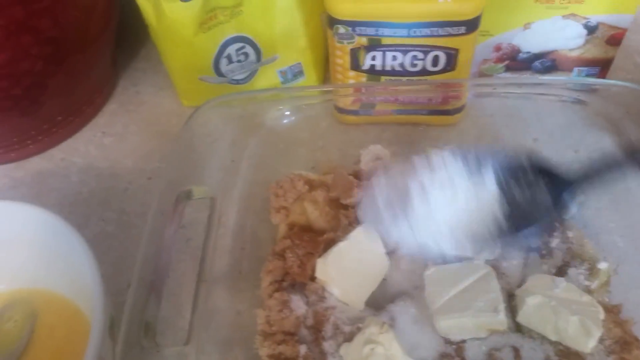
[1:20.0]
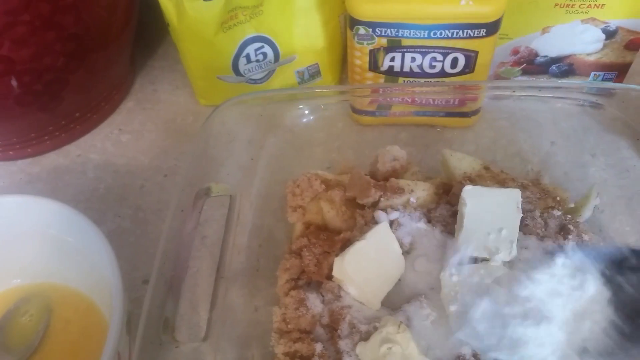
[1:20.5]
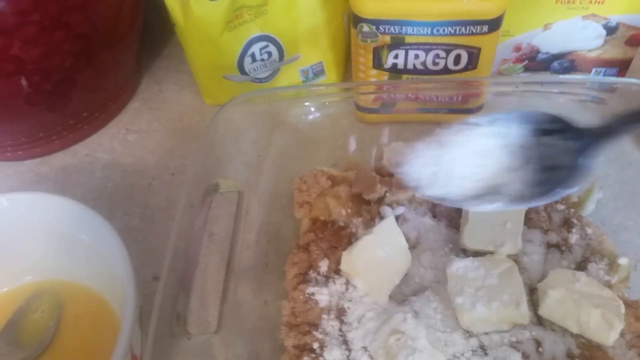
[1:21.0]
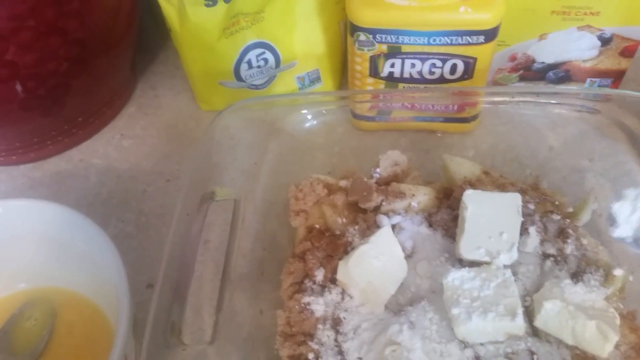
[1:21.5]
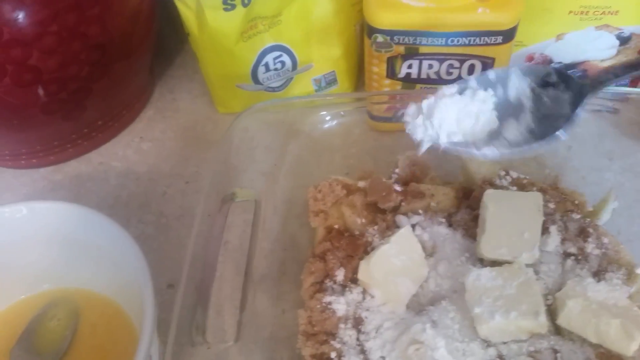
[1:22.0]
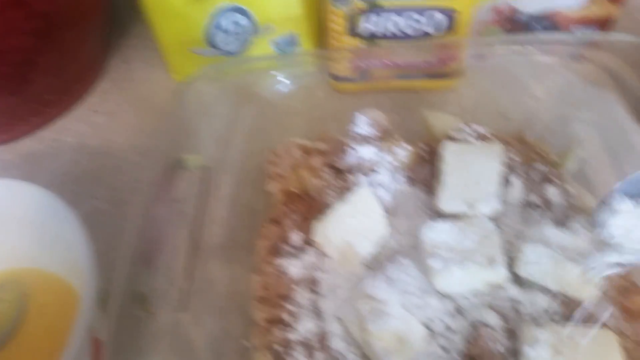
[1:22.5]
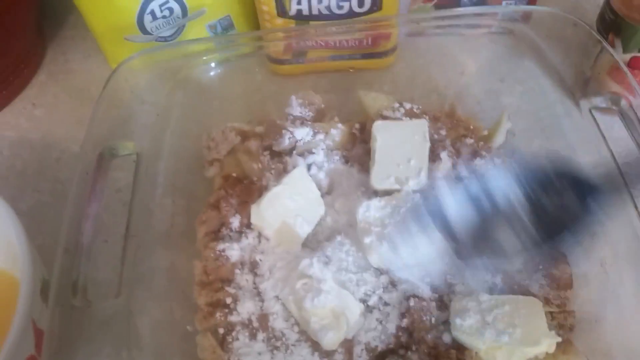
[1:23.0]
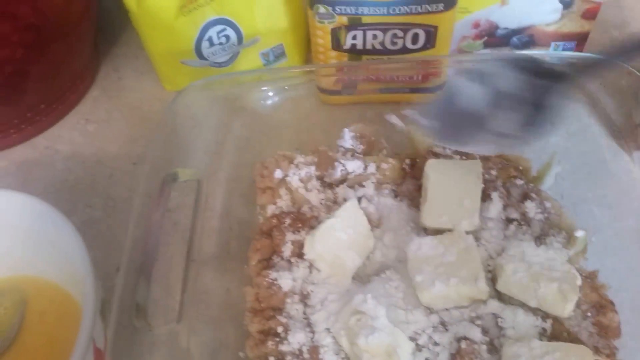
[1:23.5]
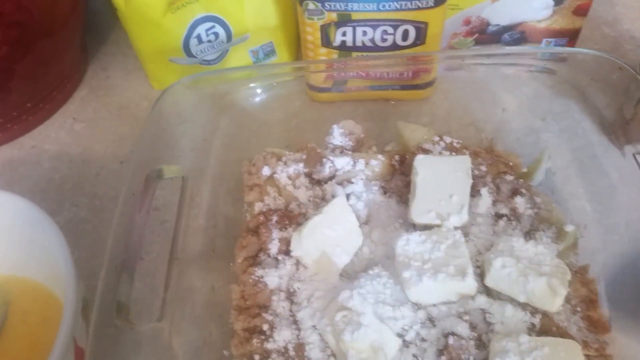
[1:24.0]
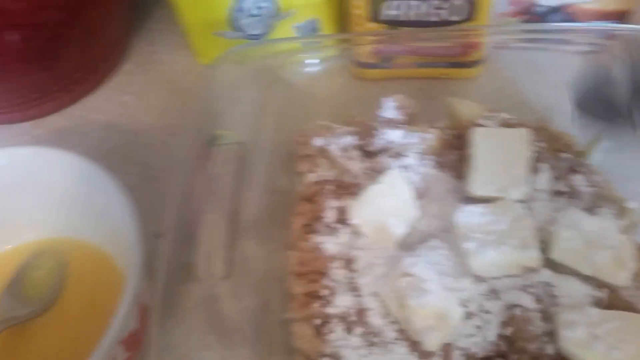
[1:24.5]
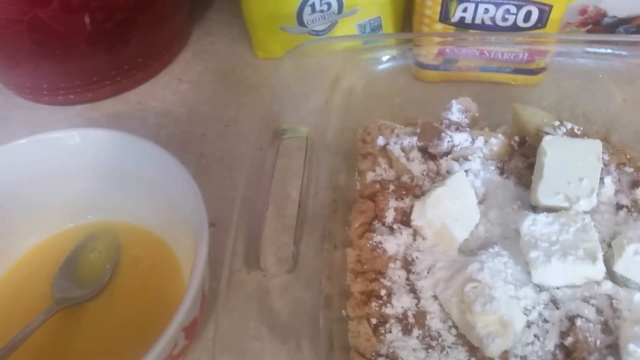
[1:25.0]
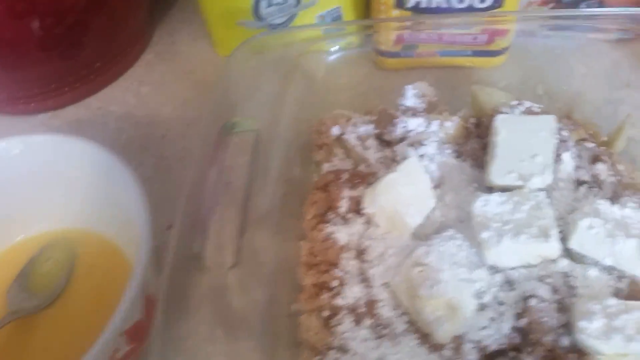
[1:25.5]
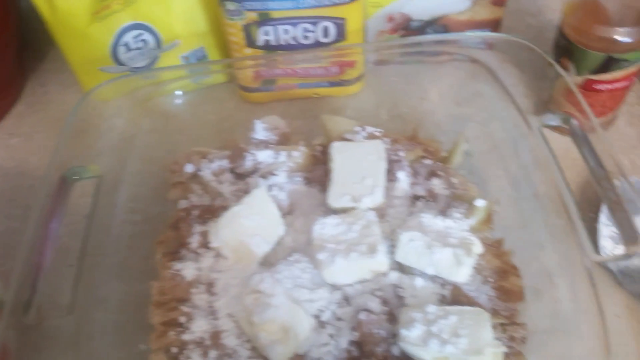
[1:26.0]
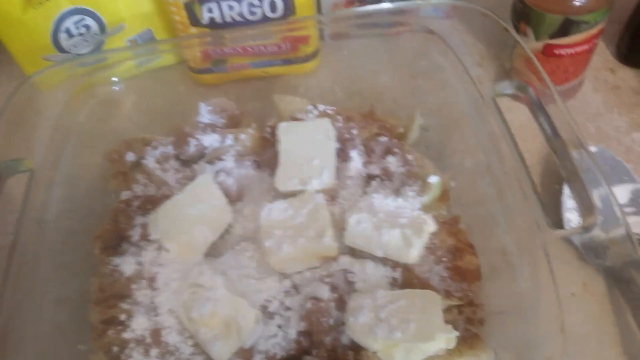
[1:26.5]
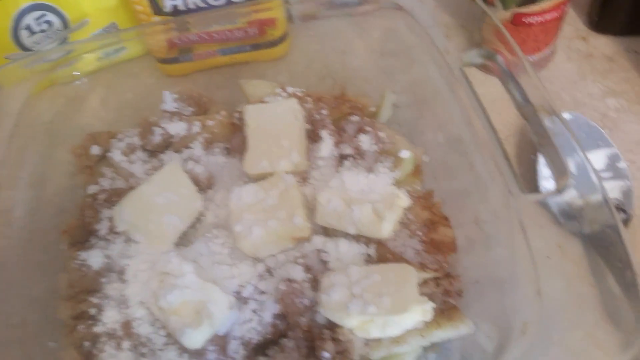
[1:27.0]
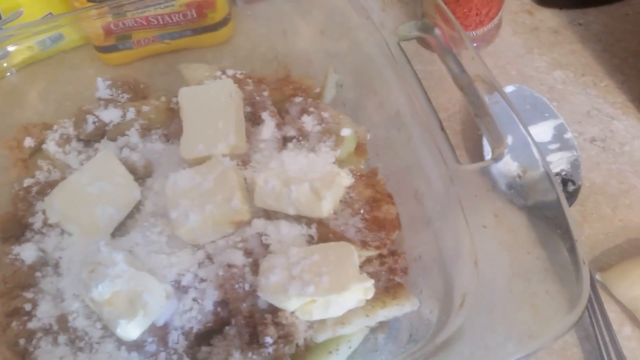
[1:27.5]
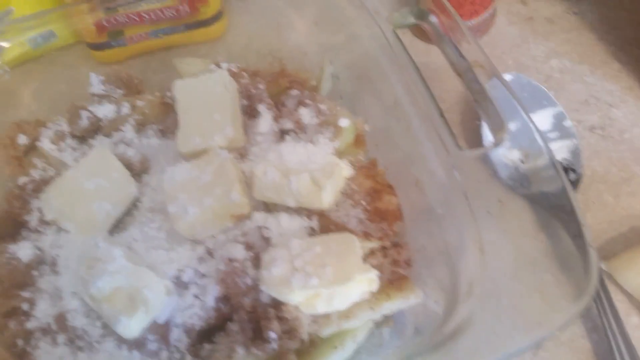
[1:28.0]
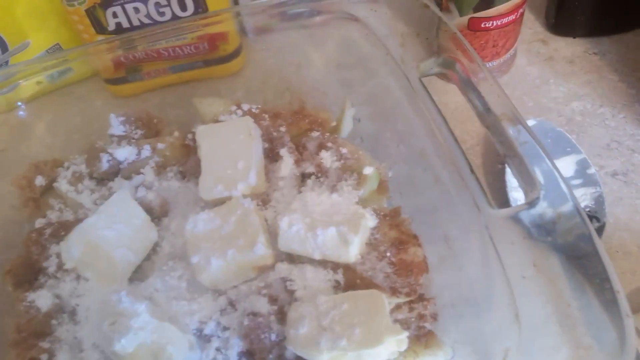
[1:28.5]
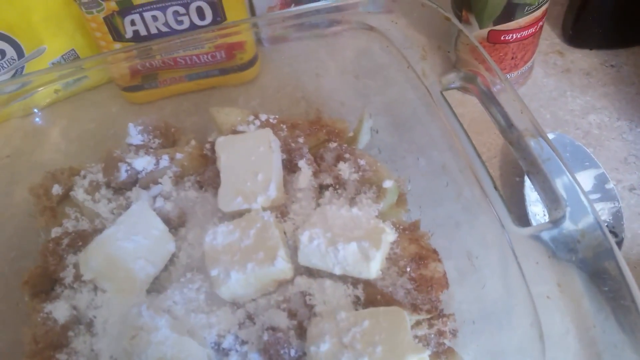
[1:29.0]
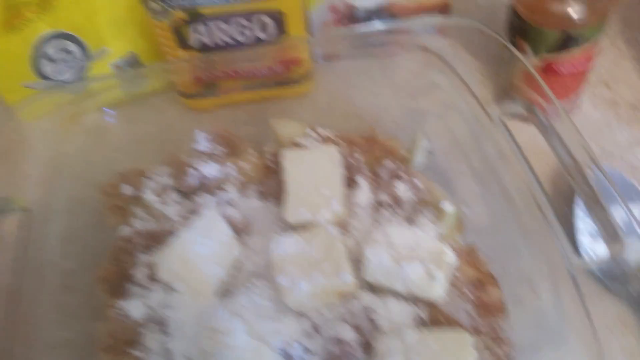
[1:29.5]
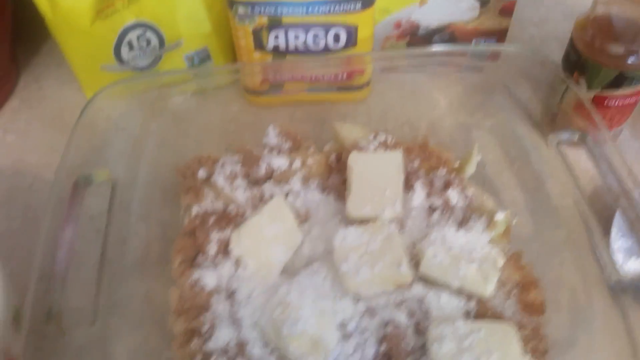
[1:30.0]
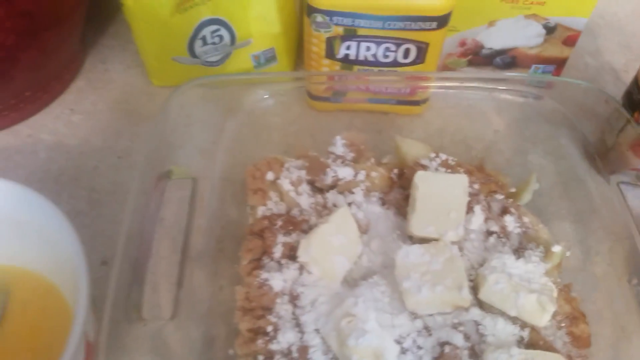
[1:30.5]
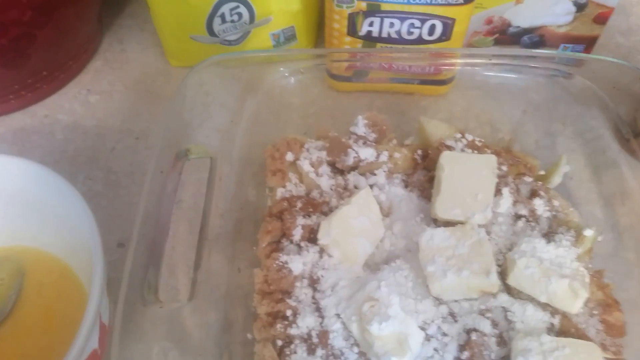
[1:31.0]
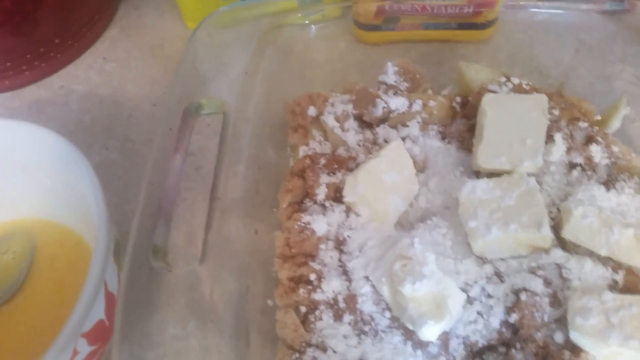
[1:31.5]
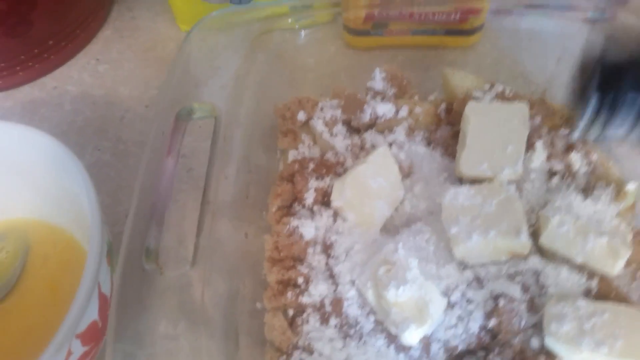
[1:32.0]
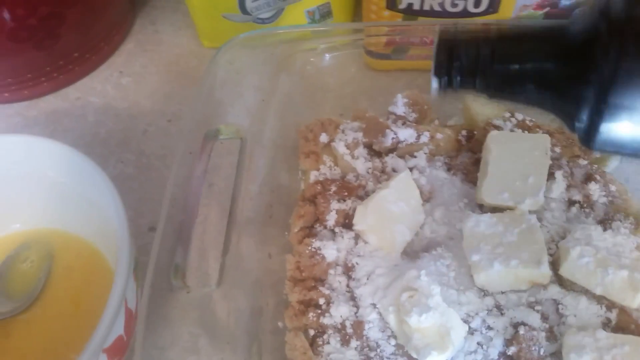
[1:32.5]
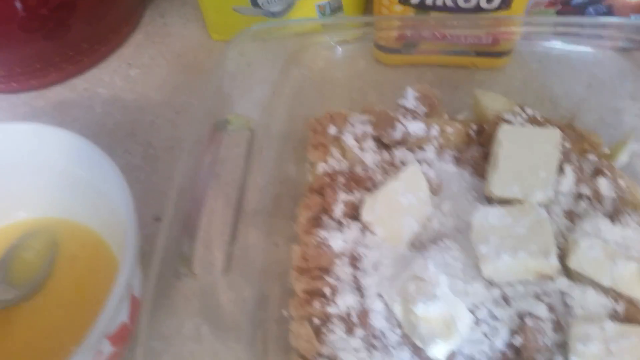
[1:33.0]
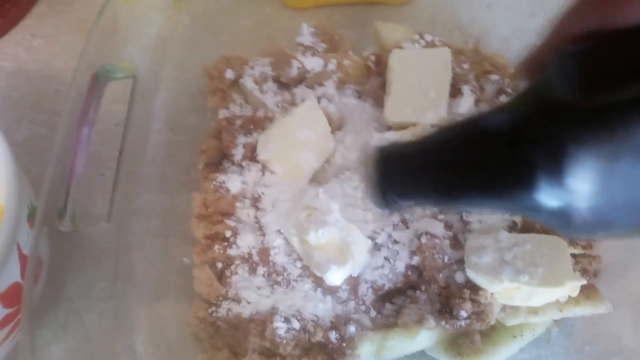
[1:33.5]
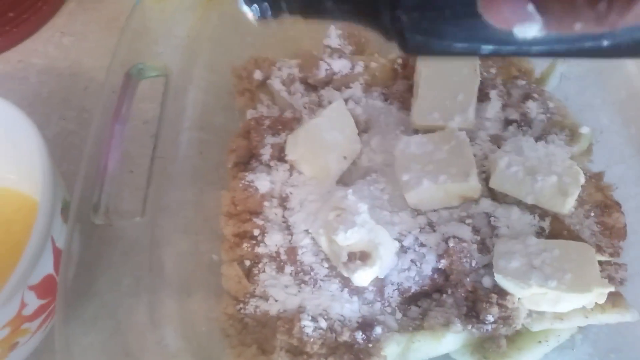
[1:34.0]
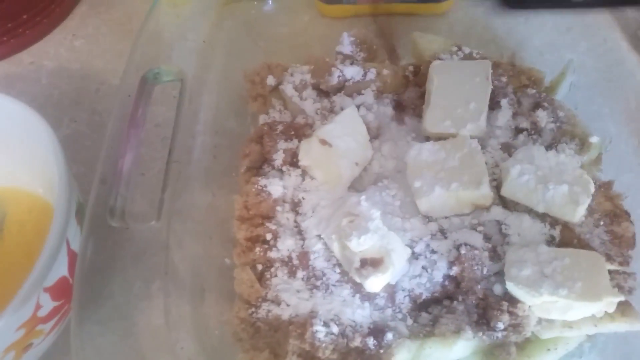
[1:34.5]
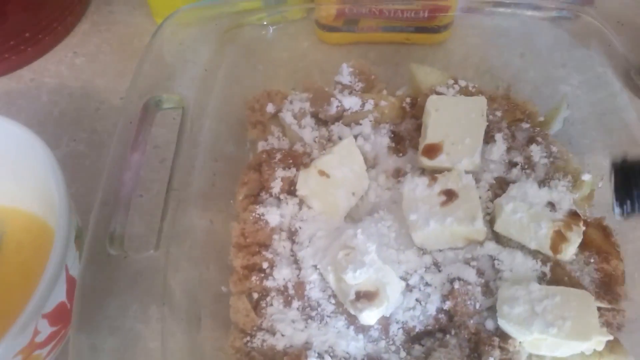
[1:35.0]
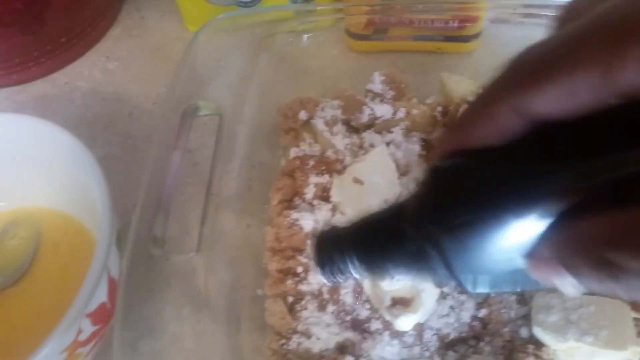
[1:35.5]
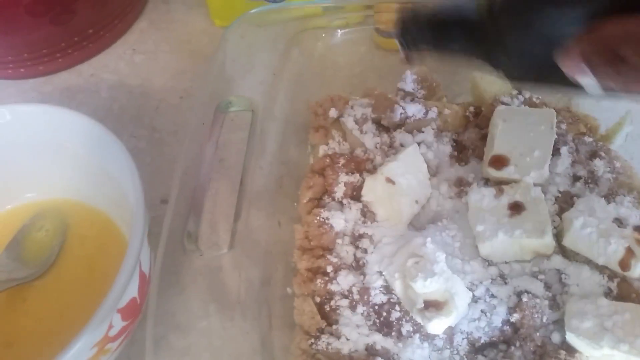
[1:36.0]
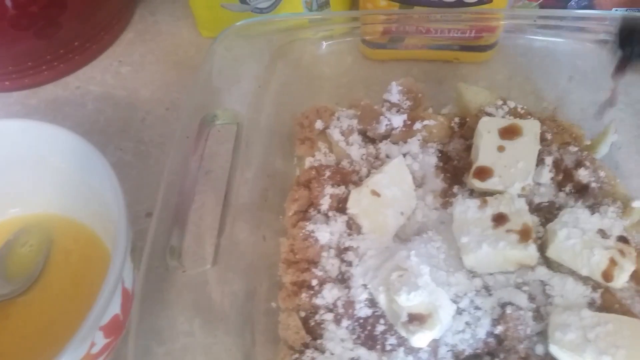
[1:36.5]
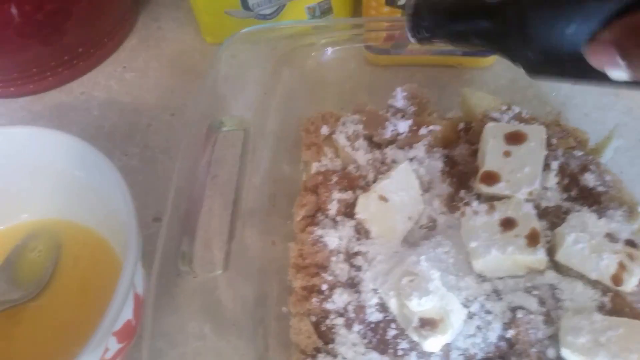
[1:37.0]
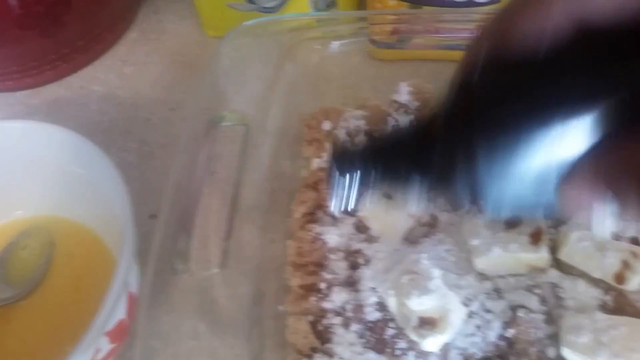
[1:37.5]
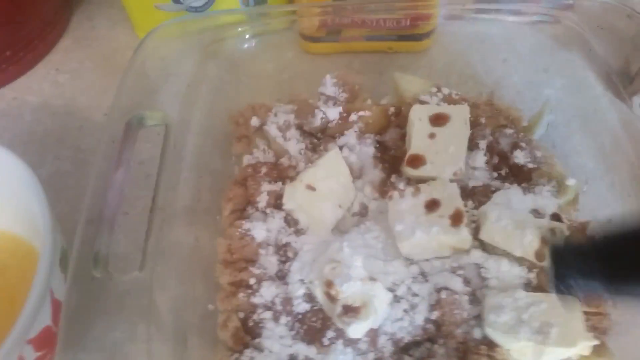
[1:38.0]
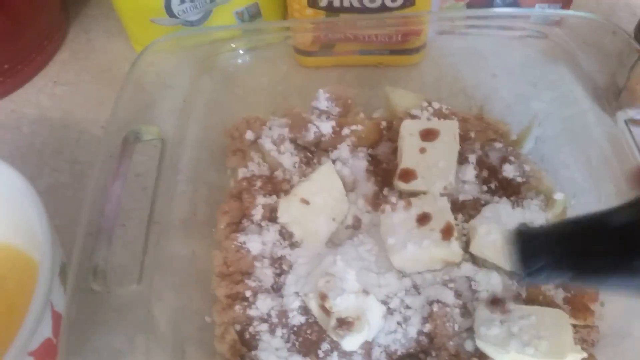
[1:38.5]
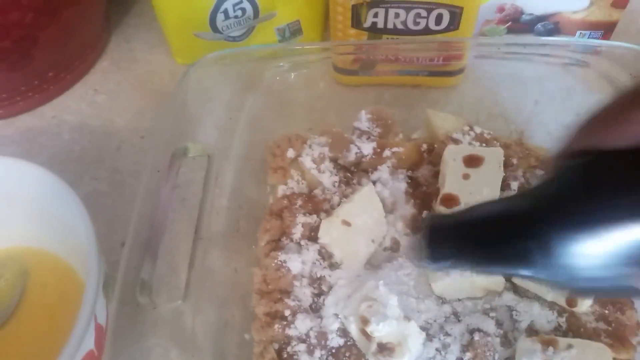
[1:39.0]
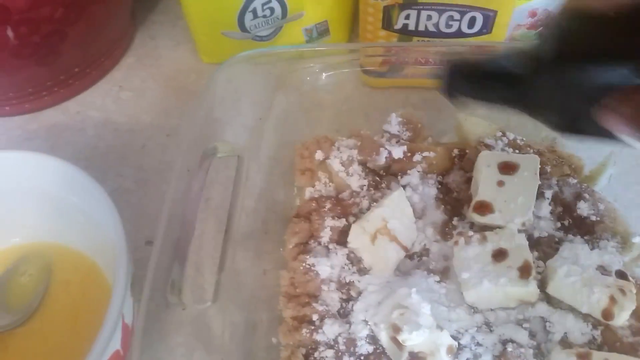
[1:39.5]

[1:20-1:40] In a baking setup against a counter-style background with many ingredients and a red vase, a white powder, baking soda or baking powder, is added with a sort of spoon to the butter, brown sugar, white sugar, and apples in the glass baking pan, with eggs in a white bowl nearby. The person then adds a few drops of vanilla from a bottle of vanilla to the dish. No other people or animals appear, and the setting does not change.